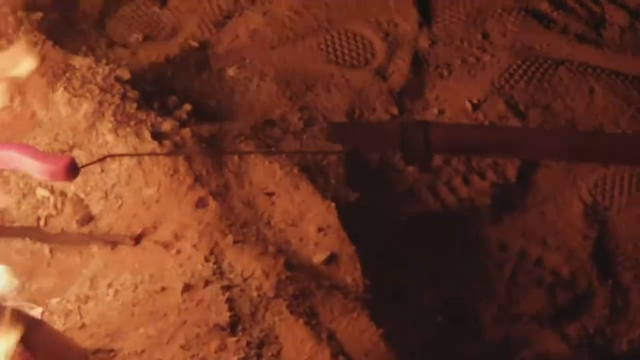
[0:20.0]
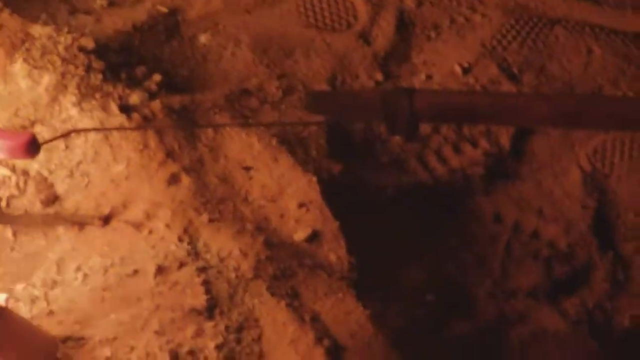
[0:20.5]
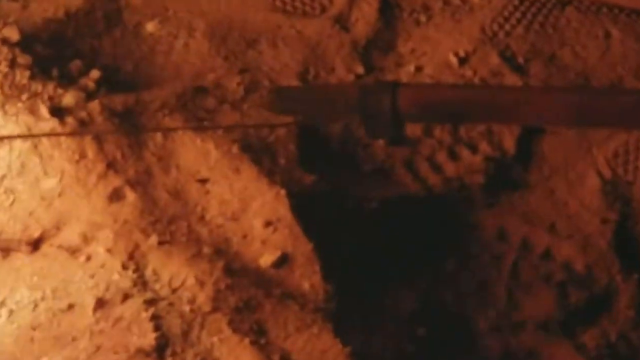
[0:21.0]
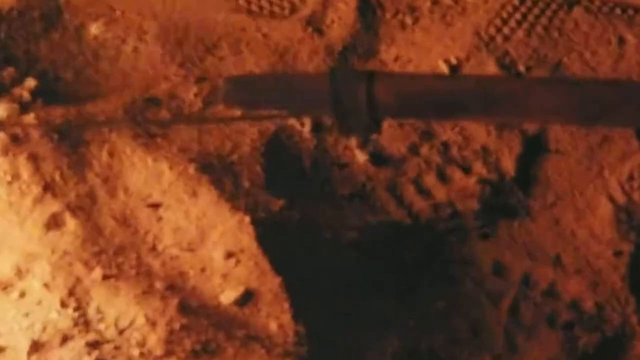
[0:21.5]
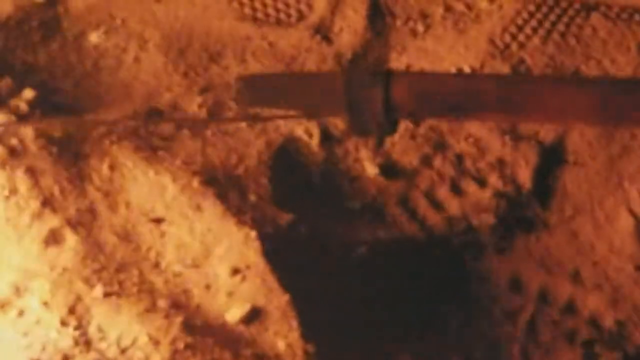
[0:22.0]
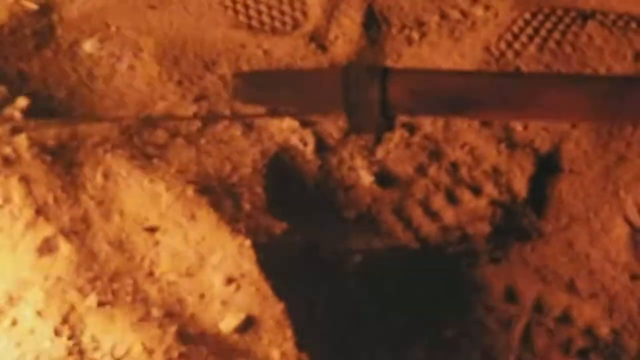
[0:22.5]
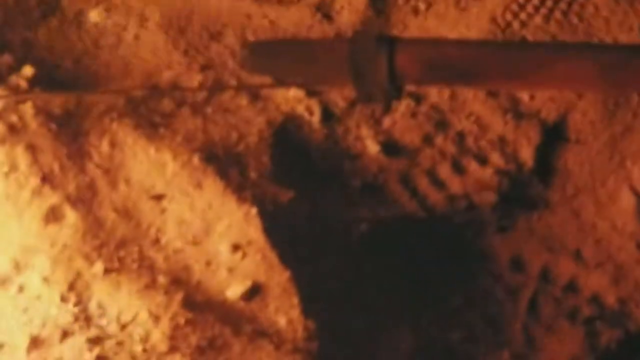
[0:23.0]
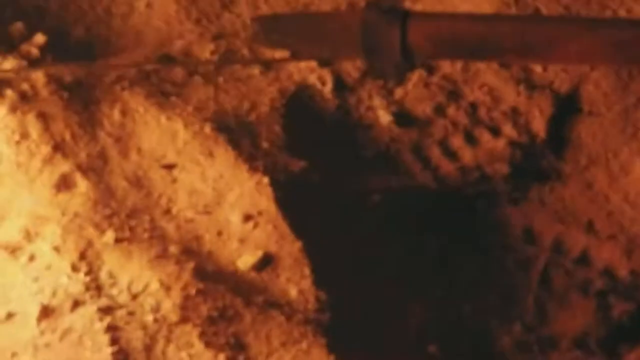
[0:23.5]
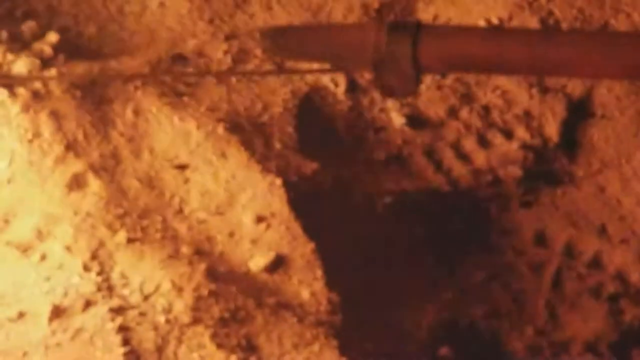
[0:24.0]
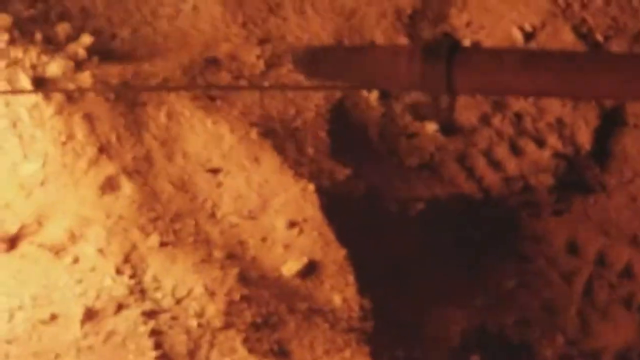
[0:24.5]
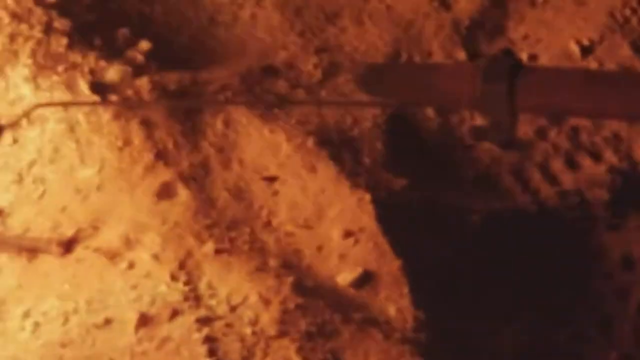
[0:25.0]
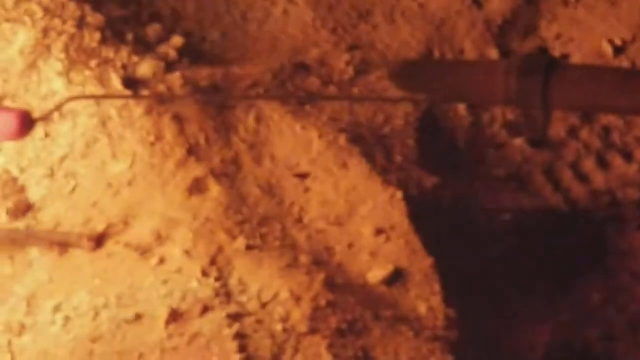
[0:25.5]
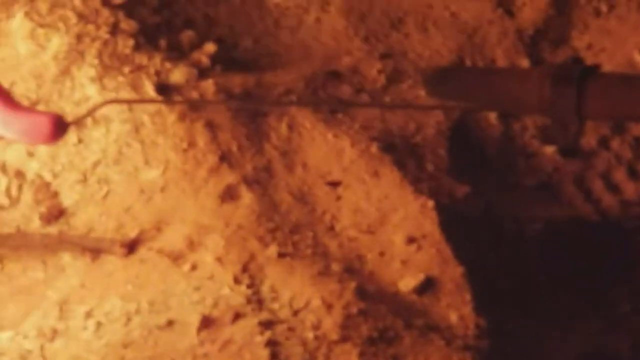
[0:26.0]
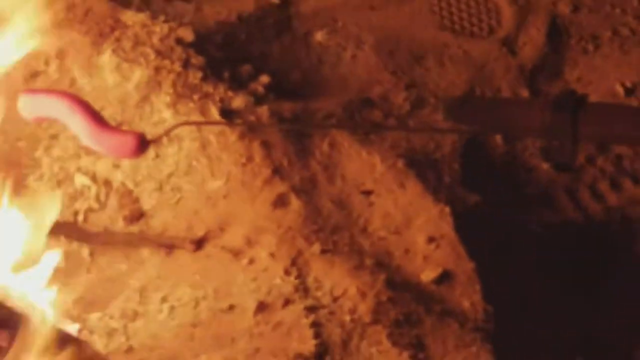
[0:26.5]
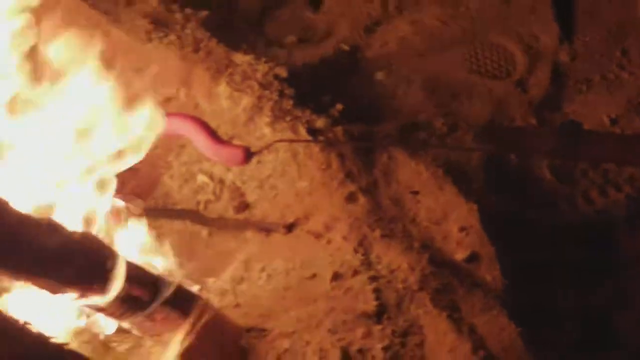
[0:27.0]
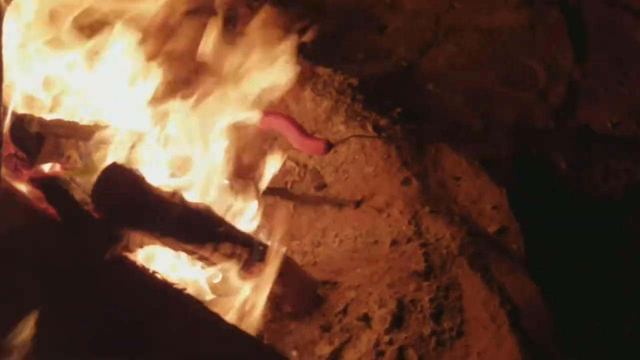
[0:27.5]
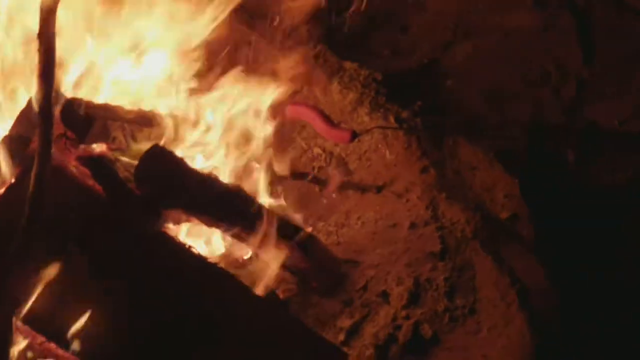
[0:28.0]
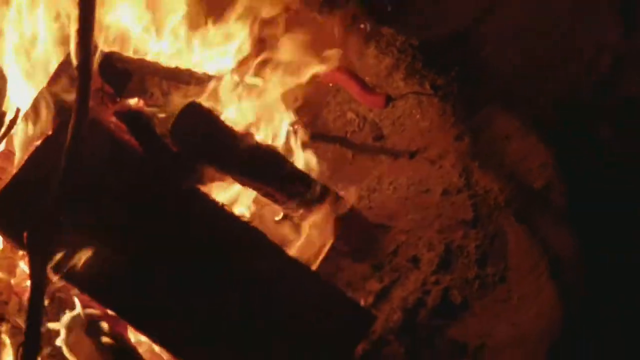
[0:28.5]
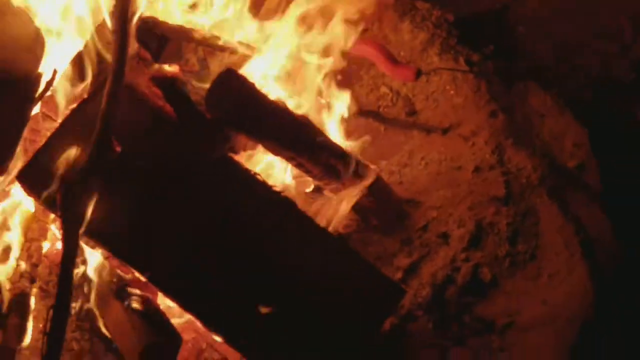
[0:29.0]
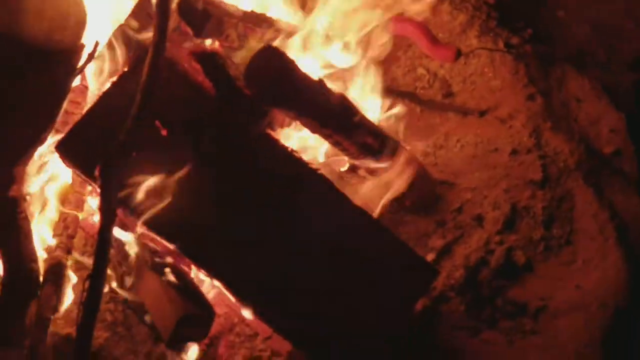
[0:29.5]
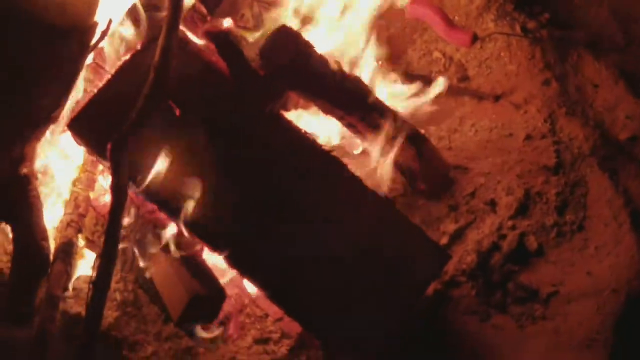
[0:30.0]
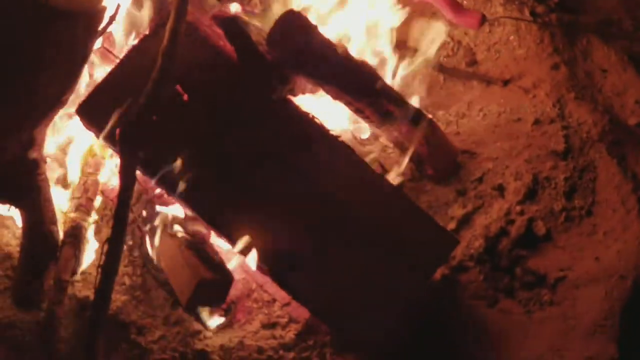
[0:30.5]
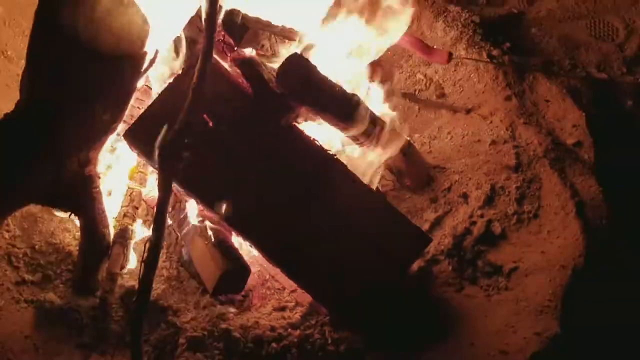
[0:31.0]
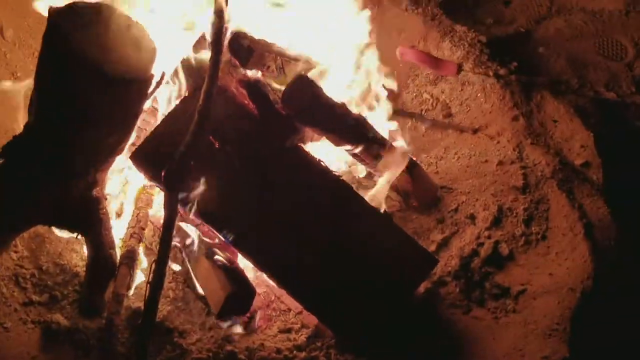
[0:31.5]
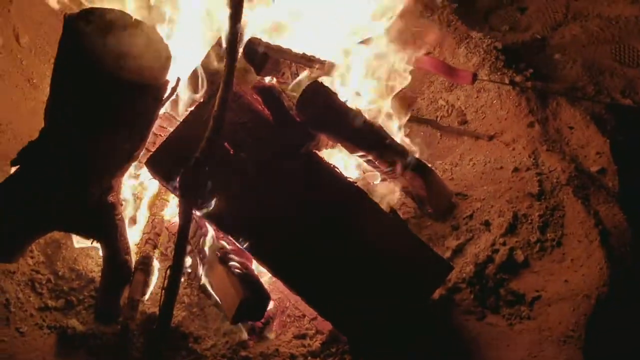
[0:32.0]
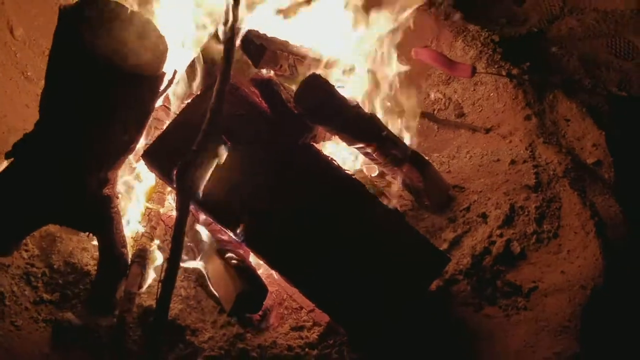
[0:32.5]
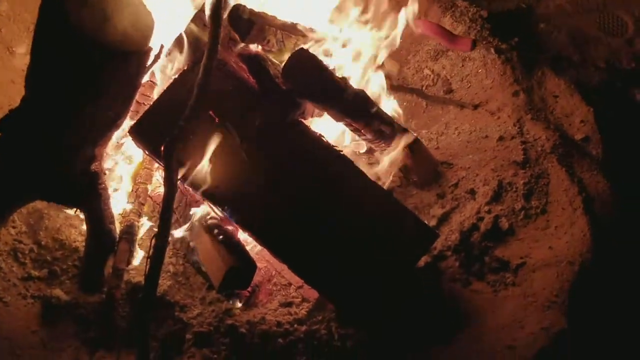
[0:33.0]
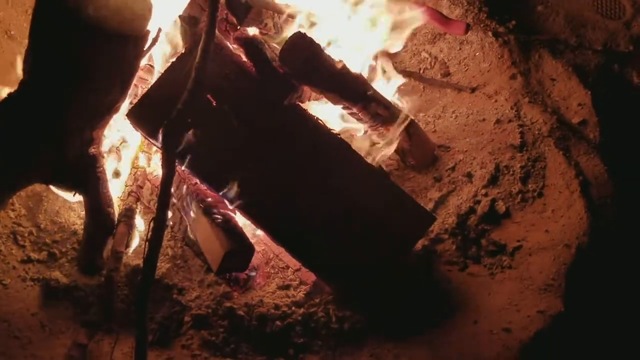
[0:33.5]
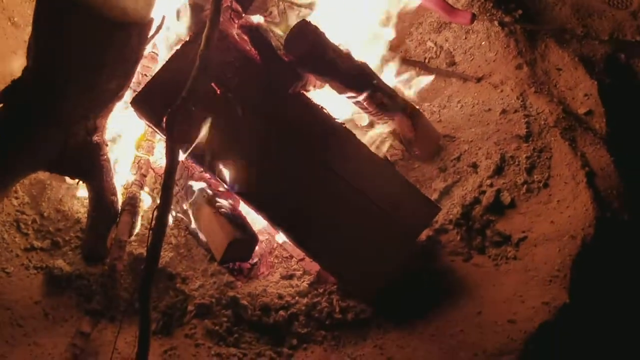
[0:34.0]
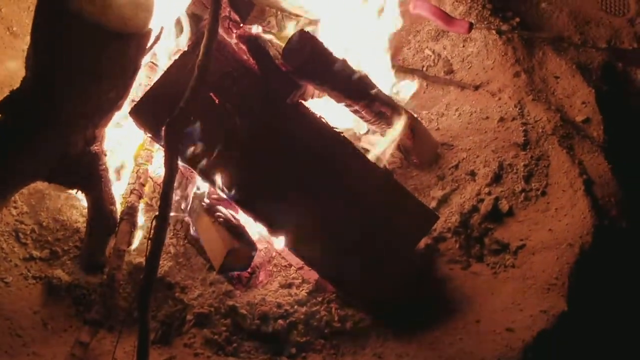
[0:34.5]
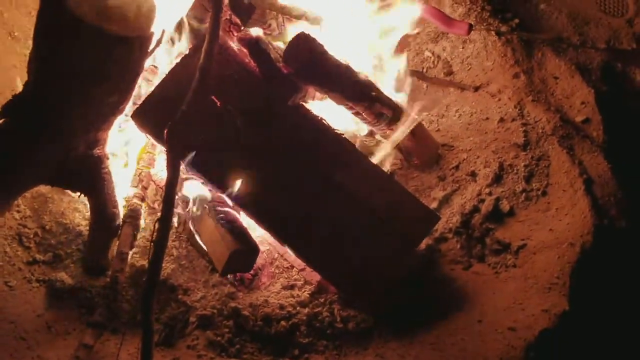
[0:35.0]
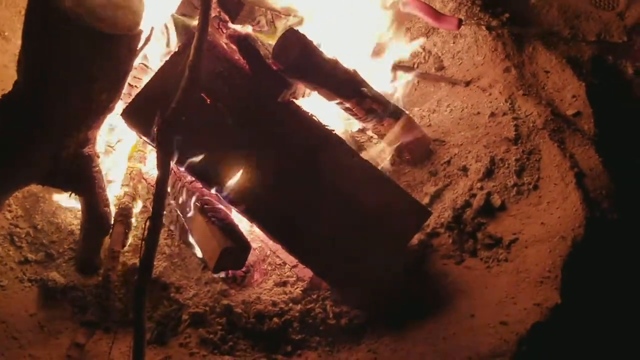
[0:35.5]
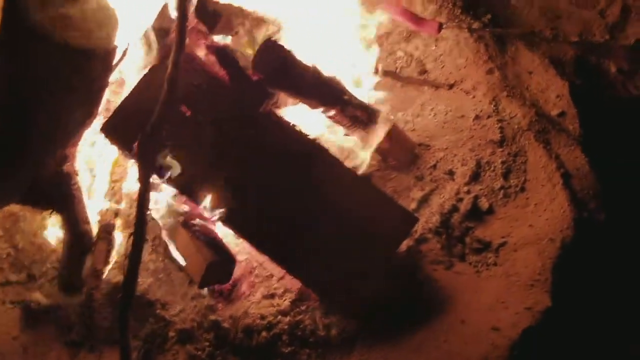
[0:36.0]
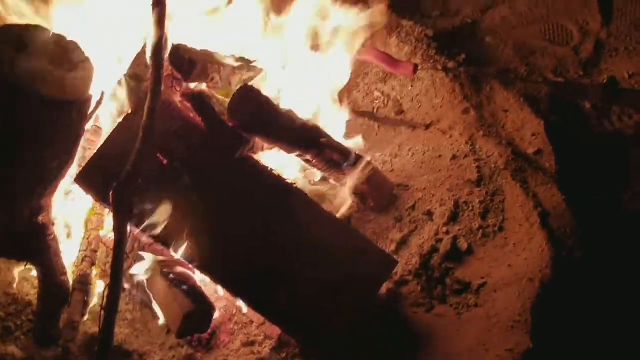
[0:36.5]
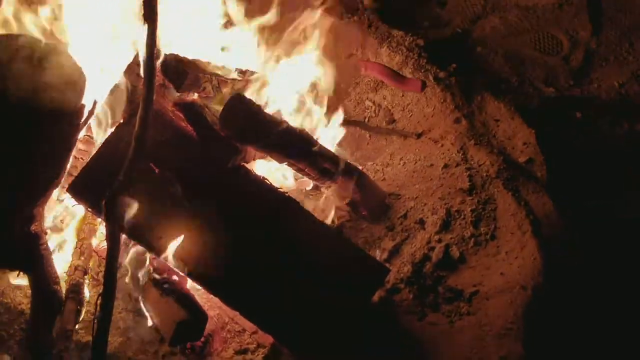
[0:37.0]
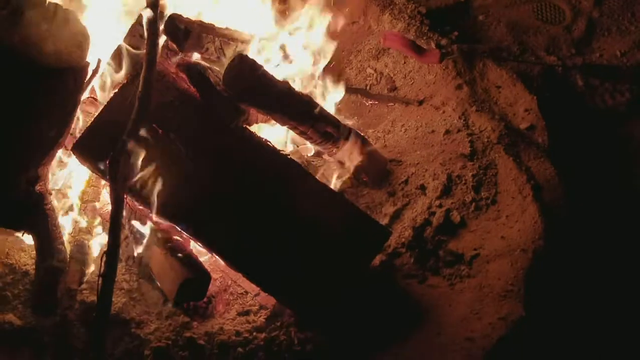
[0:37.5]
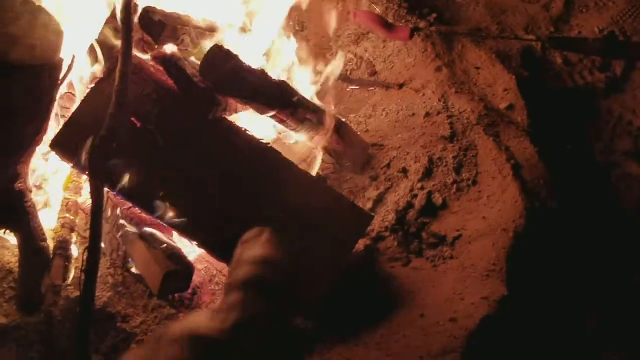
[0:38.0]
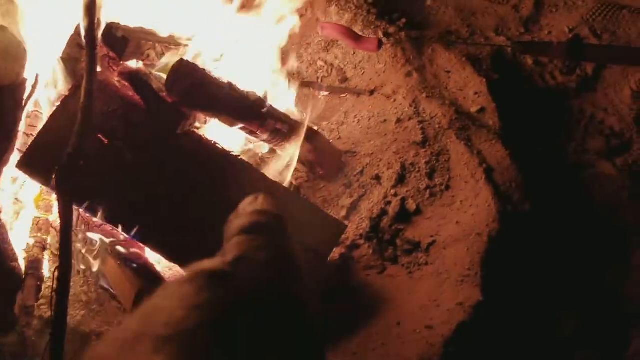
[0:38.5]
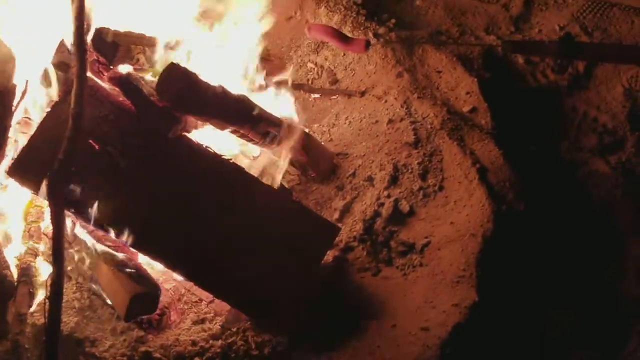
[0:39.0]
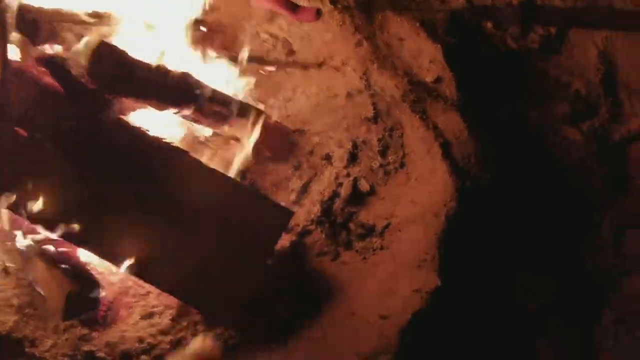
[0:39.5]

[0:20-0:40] The person holds a stick that apparently has a thin piece of steel on it, placed in the middle. A pinkish item, apparently a sausage or Vienna, is tied onto the stick. The flames grow larger as the person holds the sausage to the fire, and the camera zooms in and then out. A hand of another person appears, fixing the wood used for the fire.